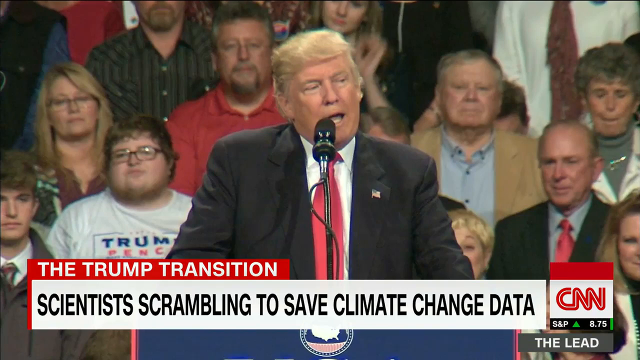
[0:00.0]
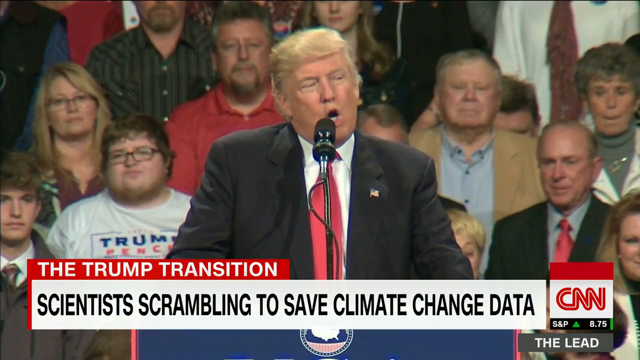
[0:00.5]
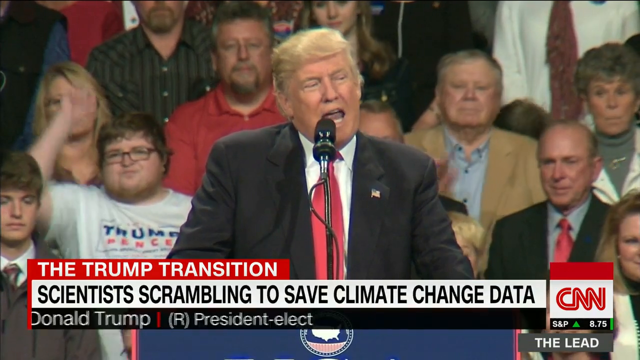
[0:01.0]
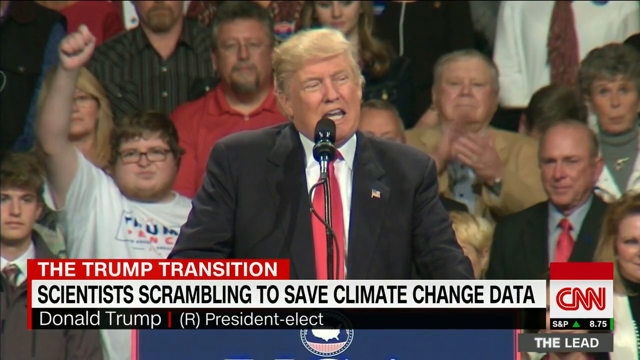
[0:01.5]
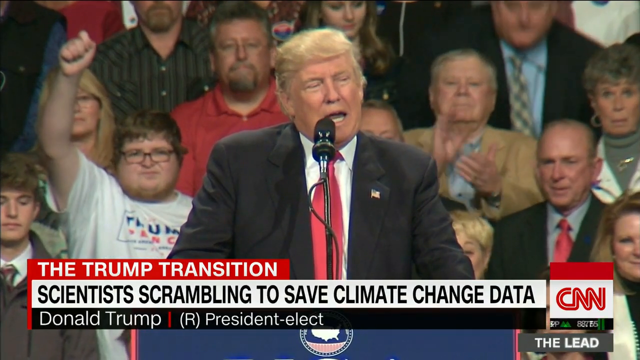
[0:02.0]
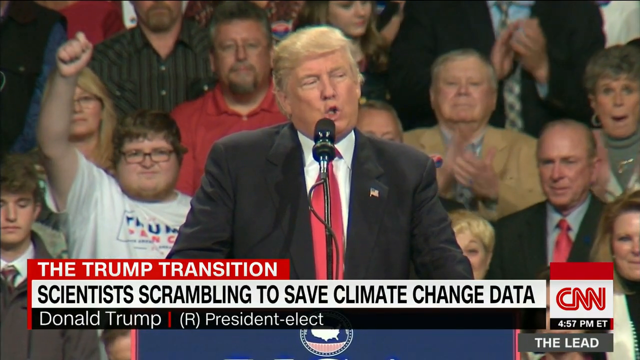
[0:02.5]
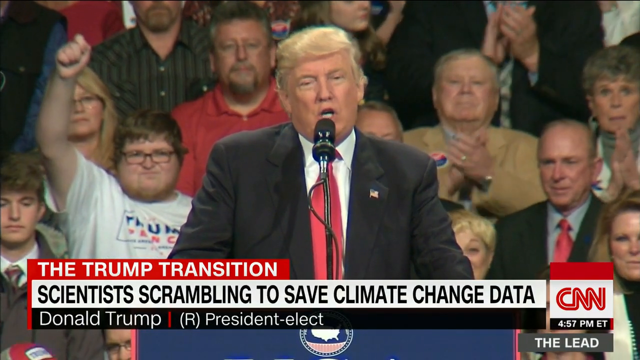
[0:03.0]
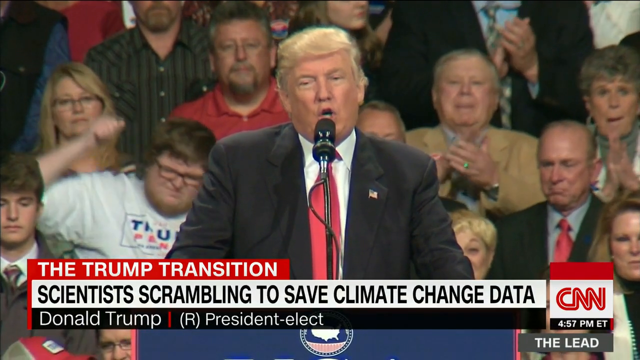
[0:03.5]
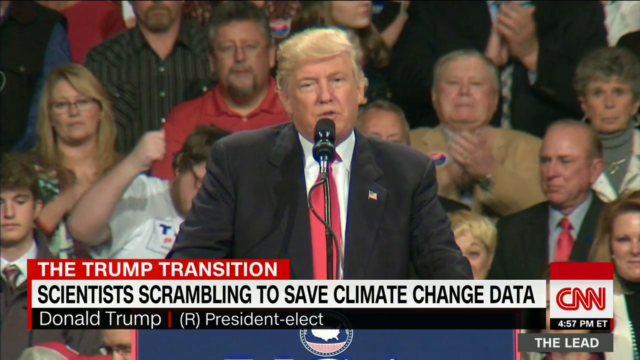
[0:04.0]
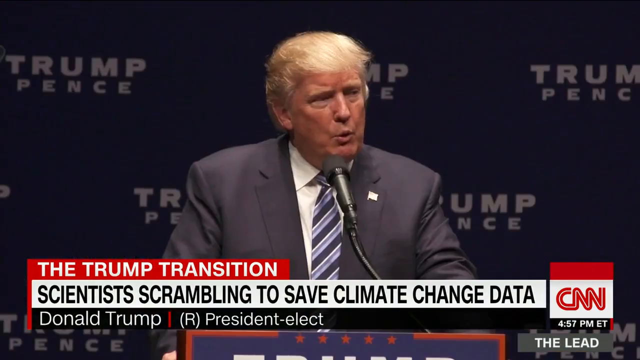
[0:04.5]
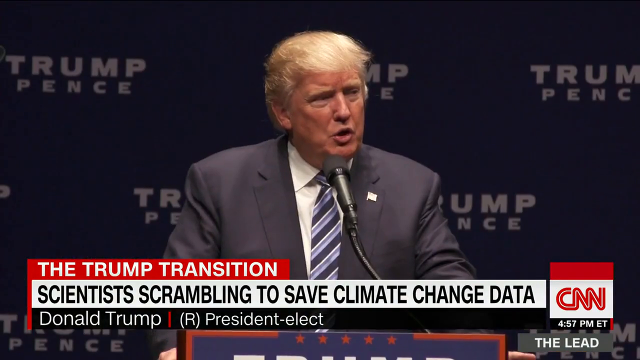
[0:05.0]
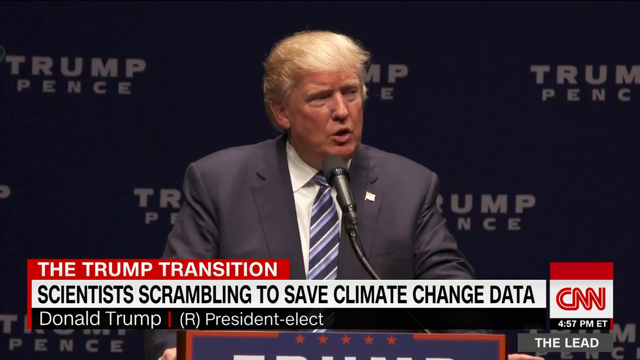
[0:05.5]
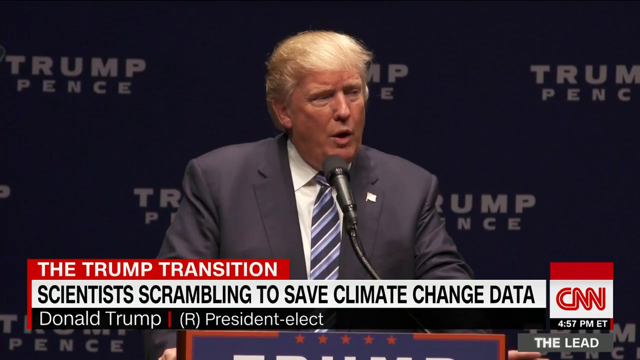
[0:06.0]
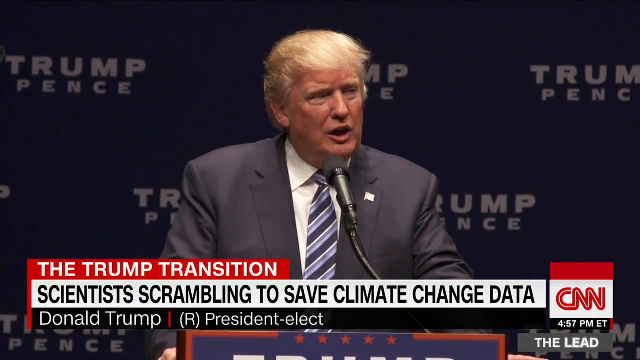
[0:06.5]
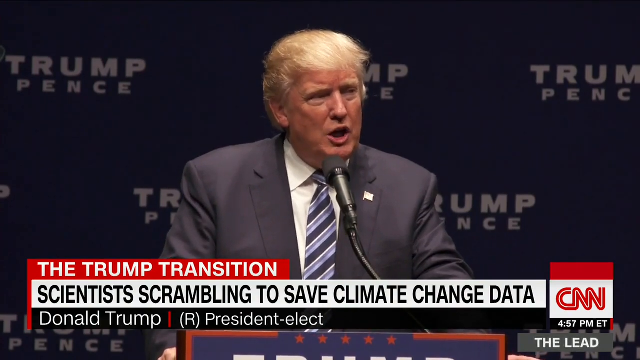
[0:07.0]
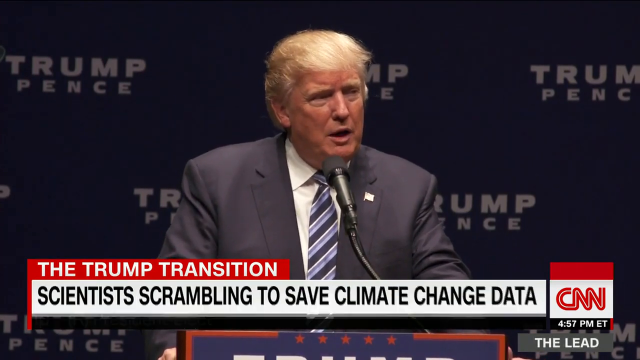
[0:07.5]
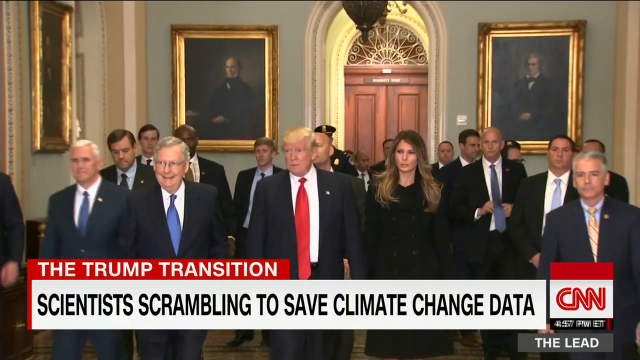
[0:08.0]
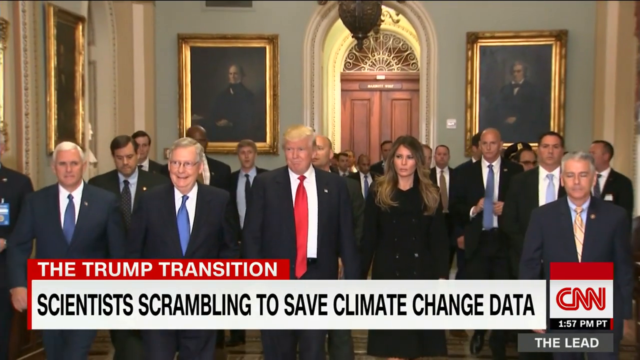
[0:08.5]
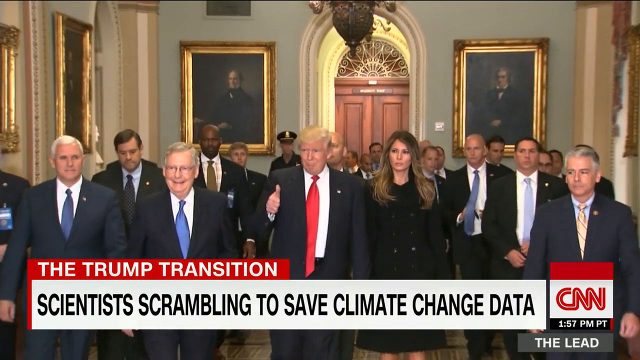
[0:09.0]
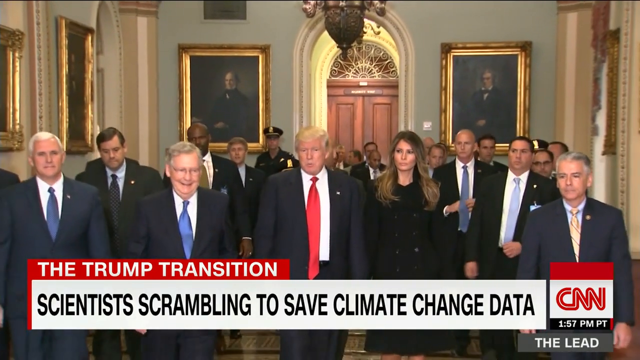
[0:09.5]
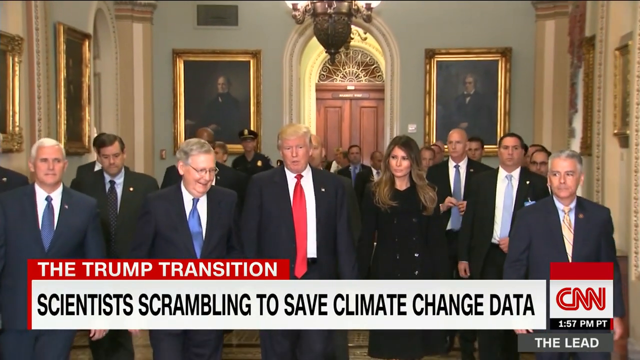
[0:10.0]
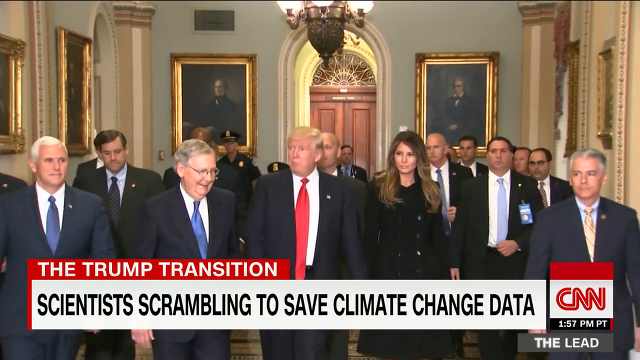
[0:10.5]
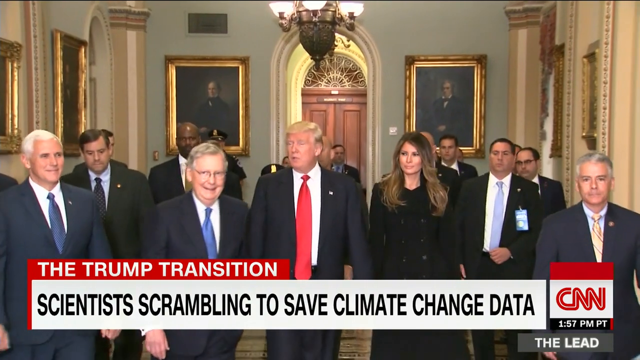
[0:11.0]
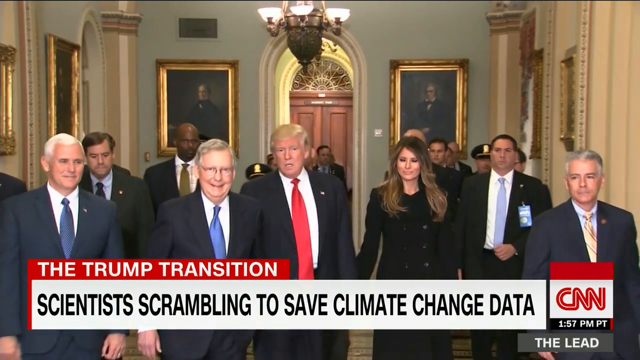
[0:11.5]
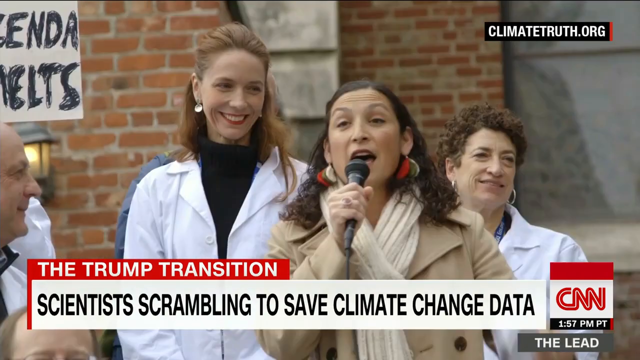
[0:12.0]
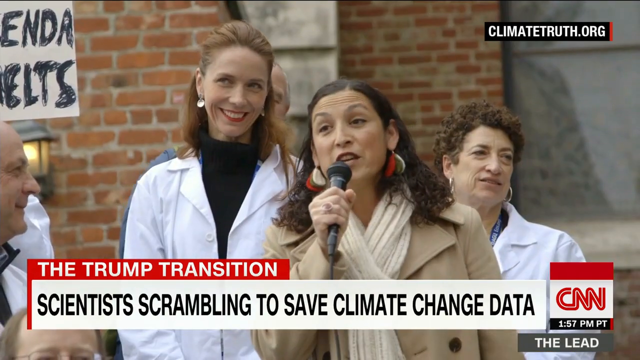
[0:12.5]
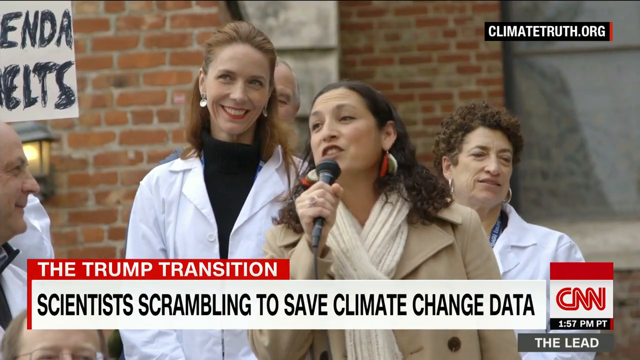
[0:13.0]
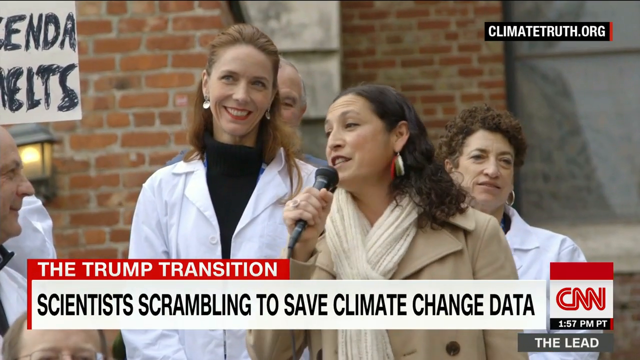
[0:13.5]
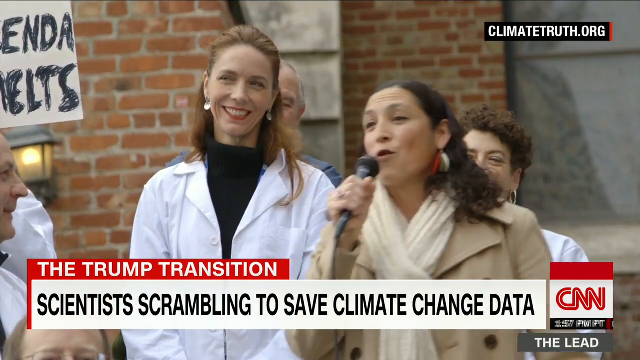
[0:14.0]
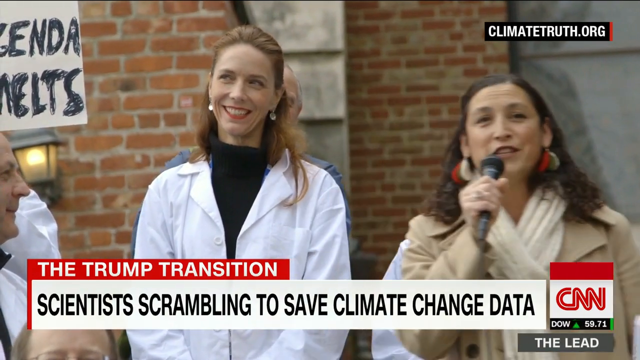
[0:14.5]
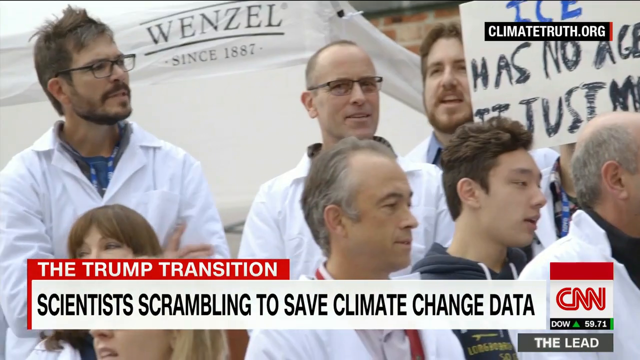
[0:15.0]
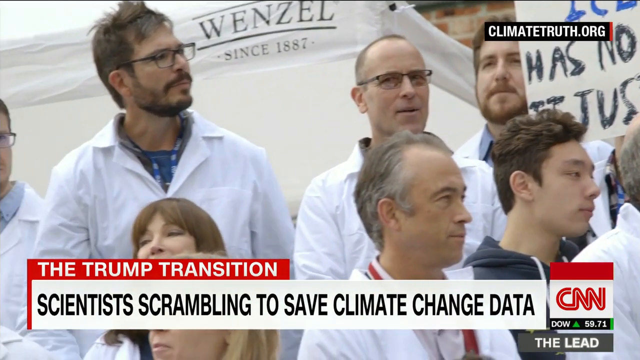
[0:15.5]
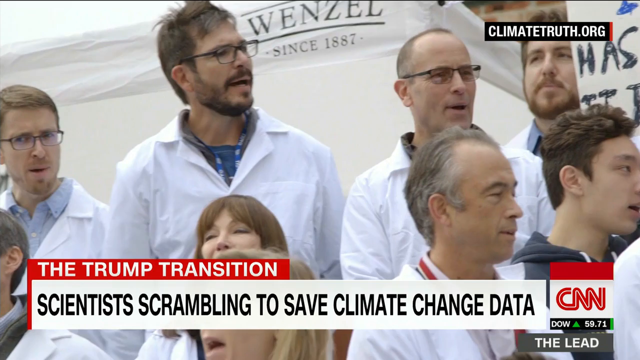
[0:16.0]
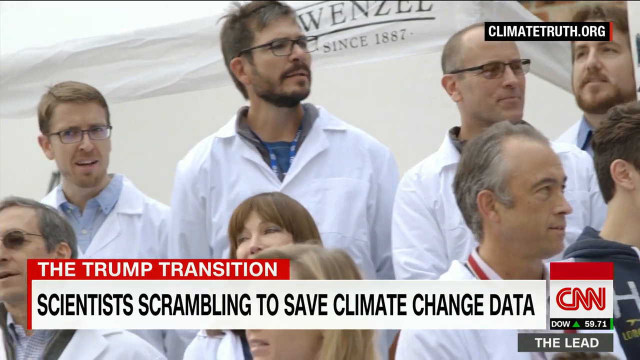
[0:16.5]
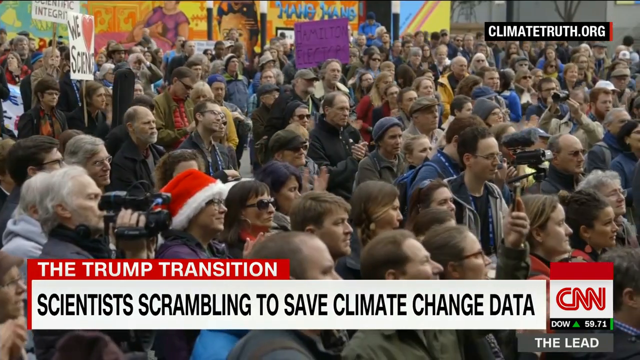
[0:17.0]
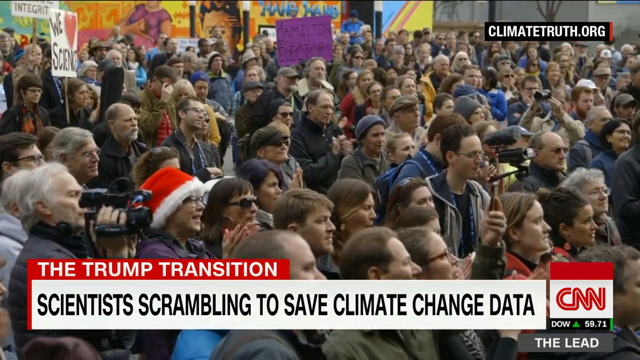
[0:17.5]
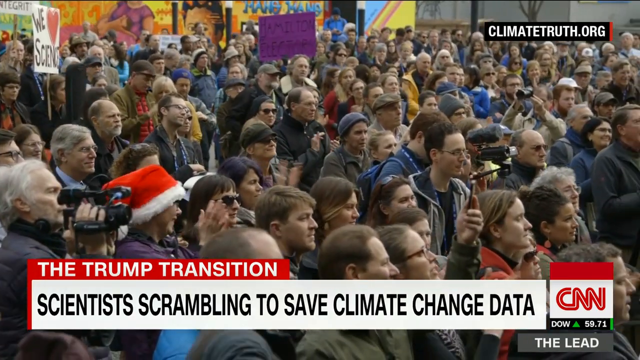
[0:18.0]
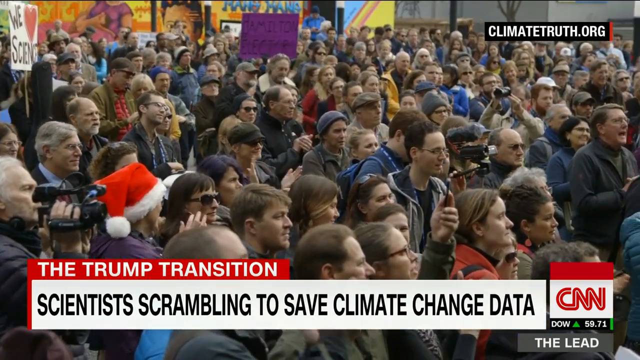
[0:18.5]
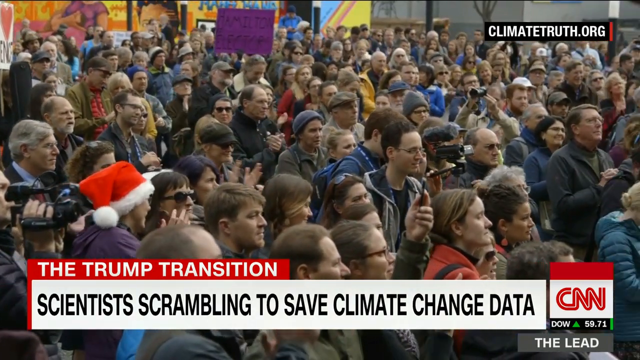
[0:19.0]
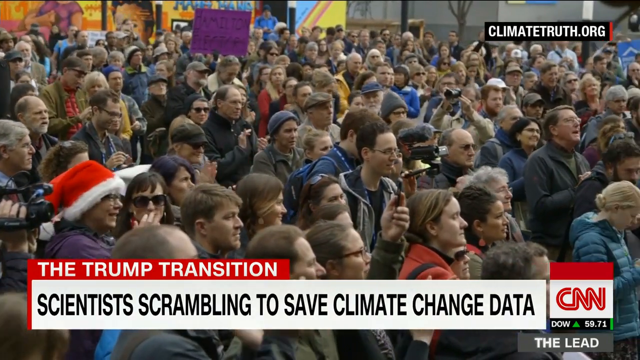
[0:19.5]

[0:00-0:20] Trump appears in an unclear location, with what looks like a crowd behind him. He wears a dark navy suit and a red tie. The footage is from CNN, and a title below reads "Trump transition scientist scrambling to save climate change data"; it also appears to say "Donald Trump president elect." As he speaks, the crowd behind him cheers. The video then switches to a different segment in which he is speaking in a blue and silver, light blue striped tie, with a Trump Pence background. Different clips follow of him in the White House with his team, with Melania standing by him at a distance. Next, women speak to a crowd in footage from climatetruth.org. The one speaking talks very emphatically and is bundled up; it looks like it is probably cold outside. Different scientists are at the event, and the camera pans to a crowd of onlookers cheering them on with protest signs.